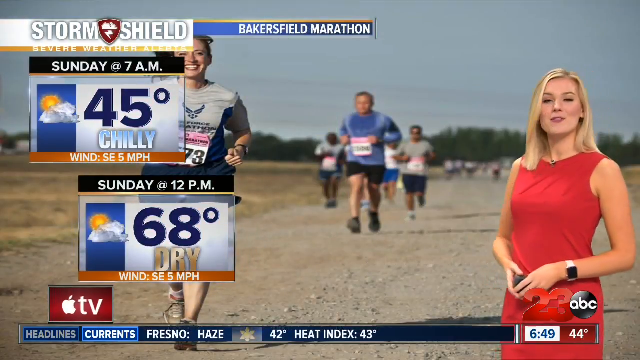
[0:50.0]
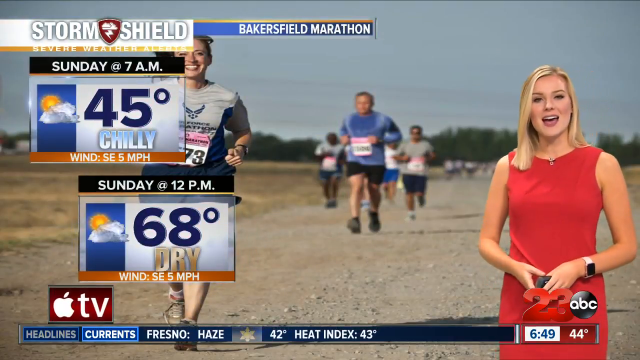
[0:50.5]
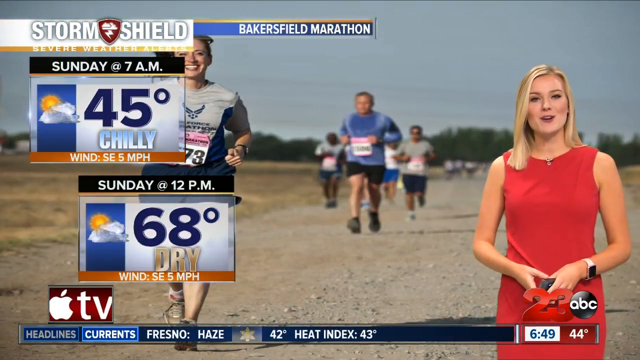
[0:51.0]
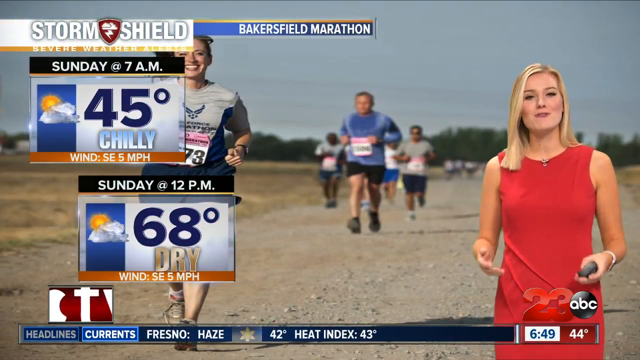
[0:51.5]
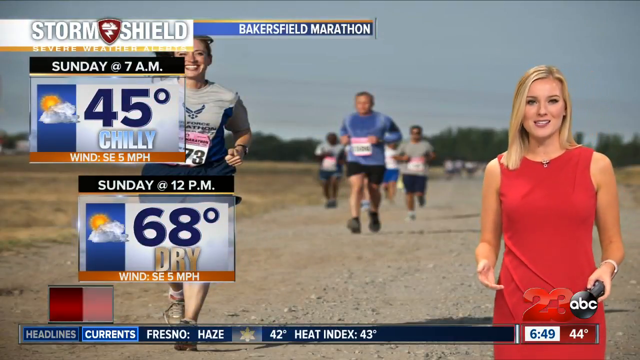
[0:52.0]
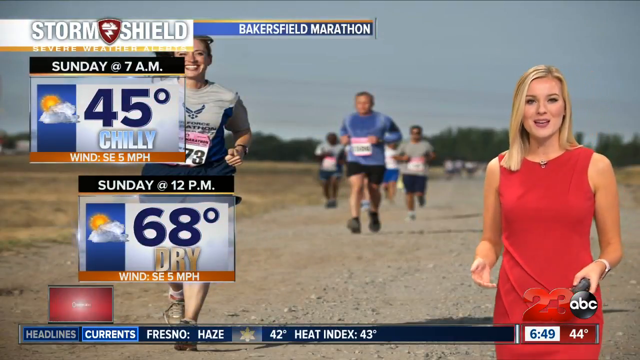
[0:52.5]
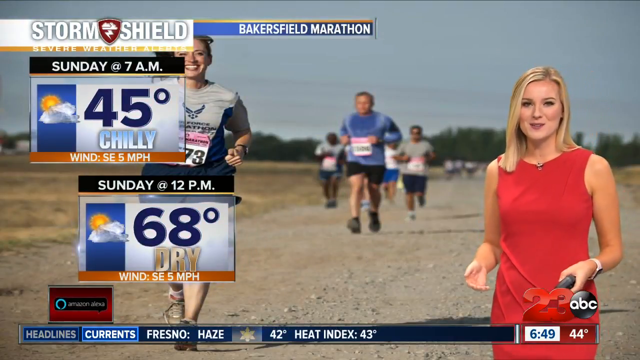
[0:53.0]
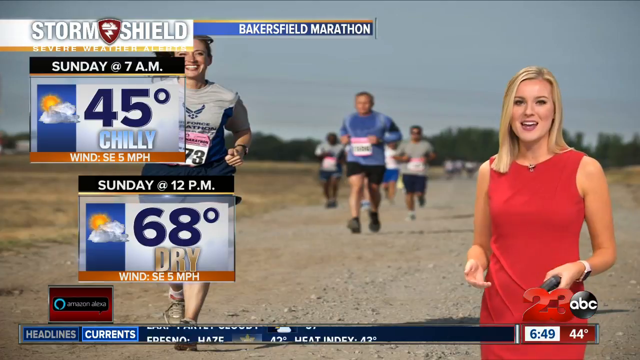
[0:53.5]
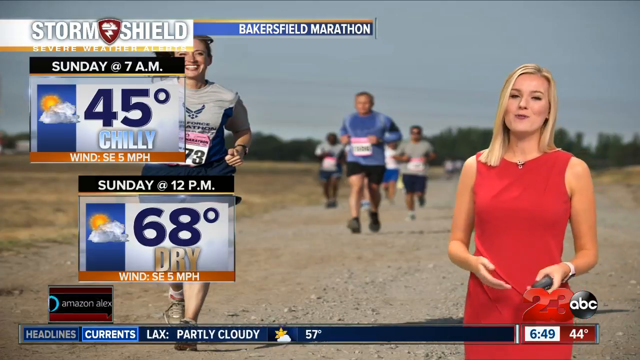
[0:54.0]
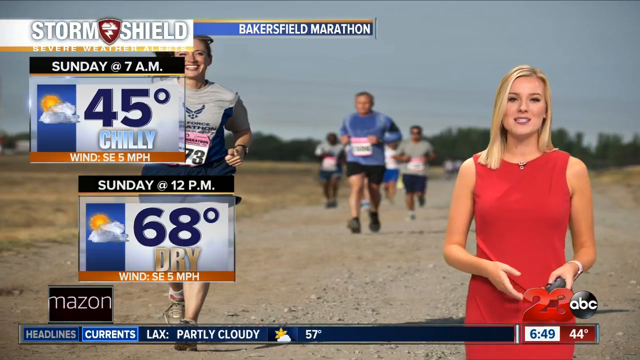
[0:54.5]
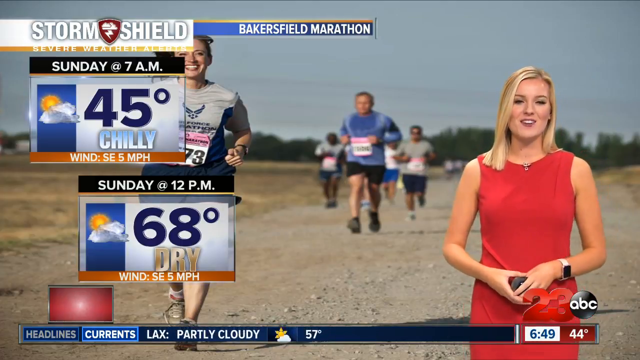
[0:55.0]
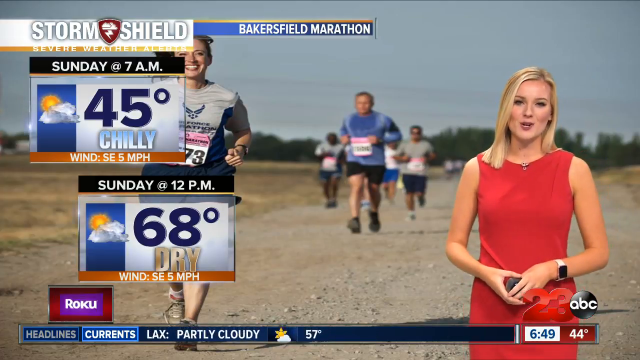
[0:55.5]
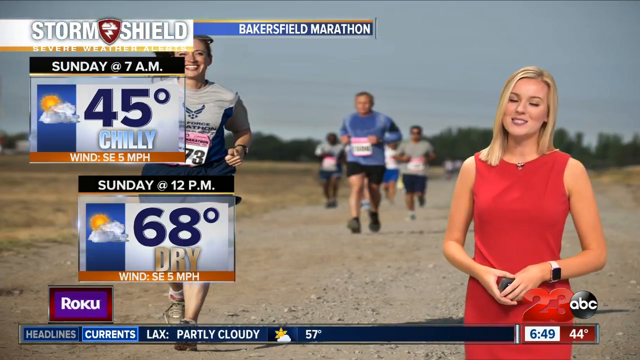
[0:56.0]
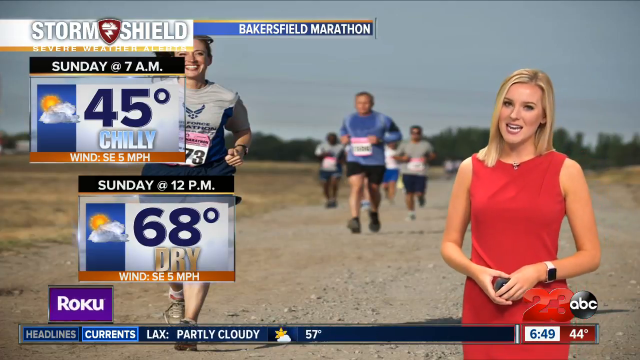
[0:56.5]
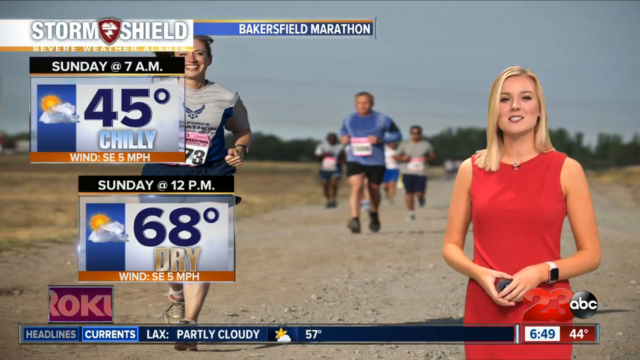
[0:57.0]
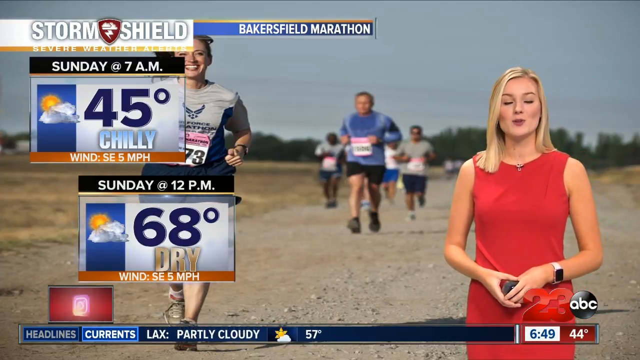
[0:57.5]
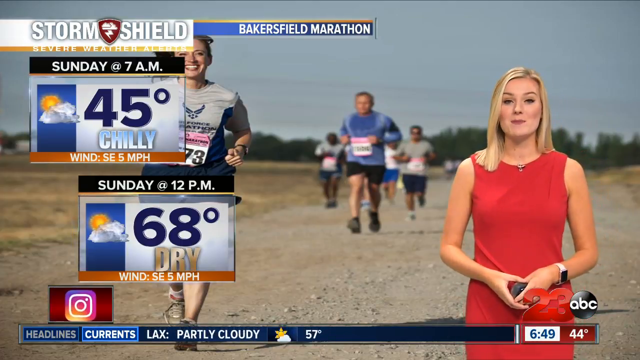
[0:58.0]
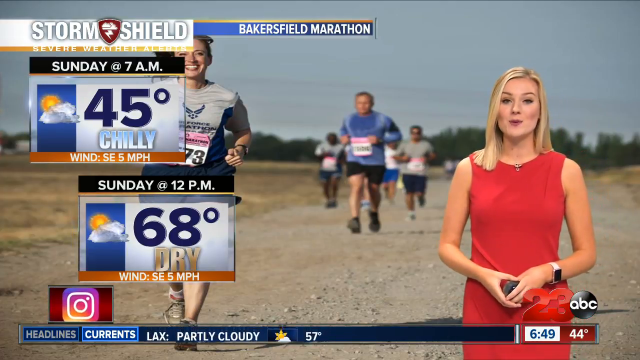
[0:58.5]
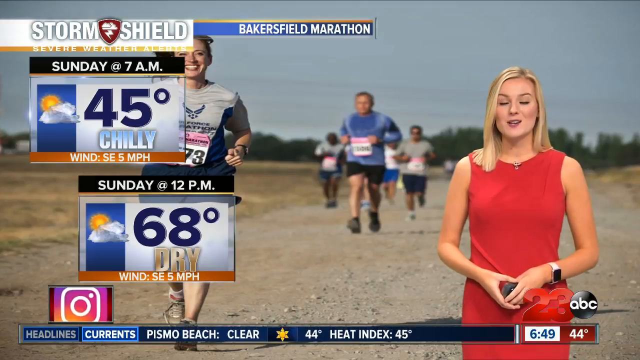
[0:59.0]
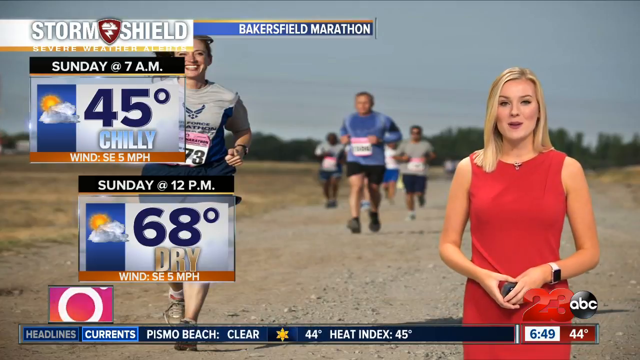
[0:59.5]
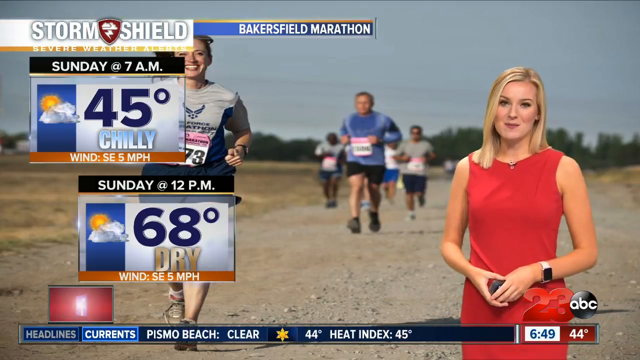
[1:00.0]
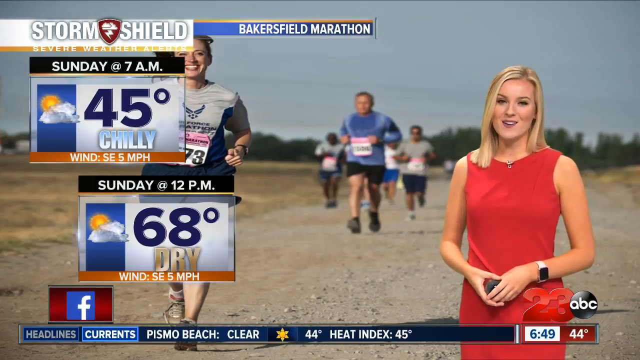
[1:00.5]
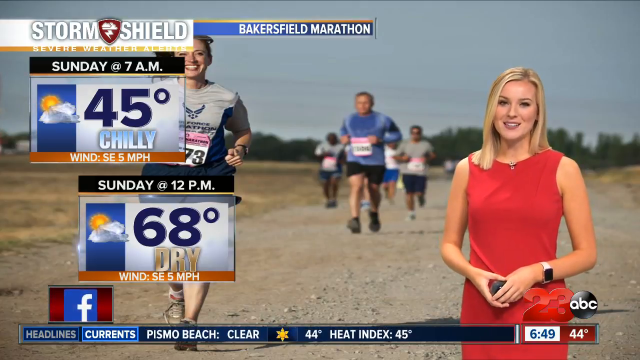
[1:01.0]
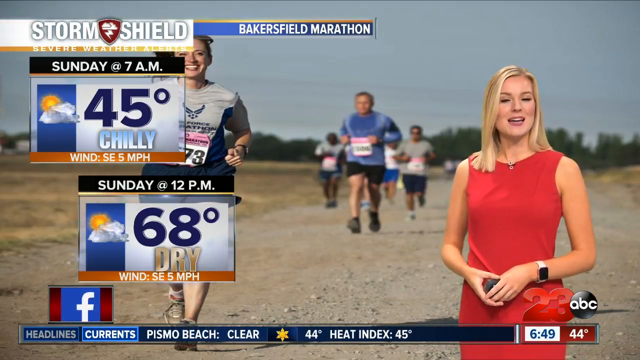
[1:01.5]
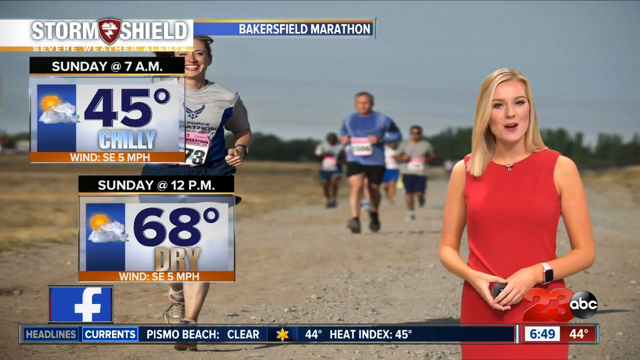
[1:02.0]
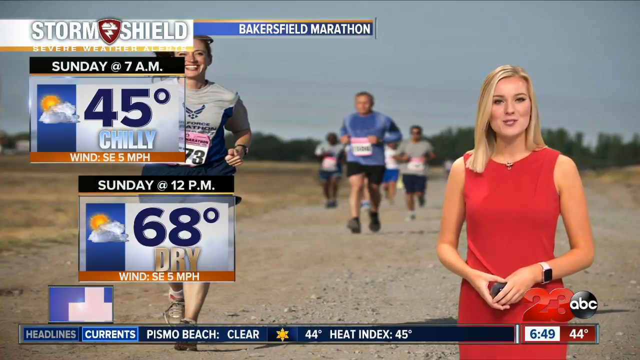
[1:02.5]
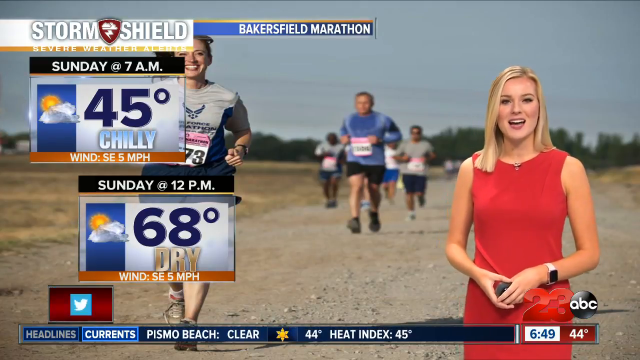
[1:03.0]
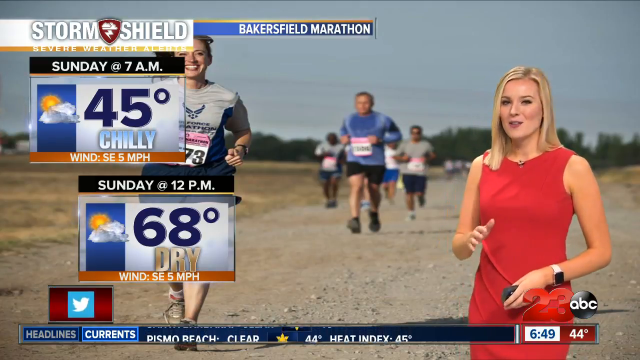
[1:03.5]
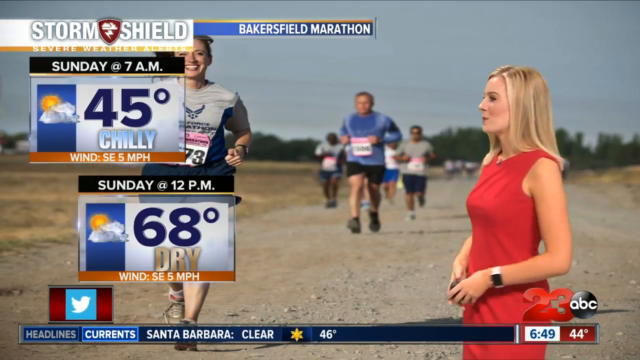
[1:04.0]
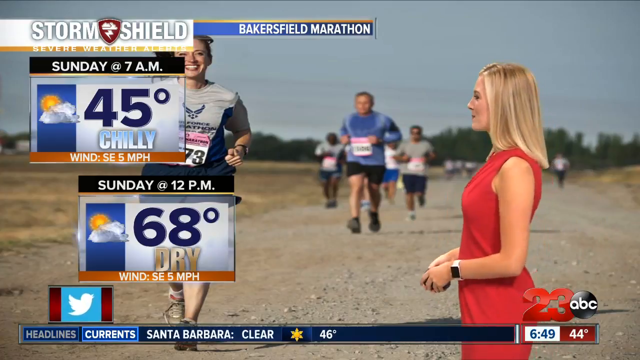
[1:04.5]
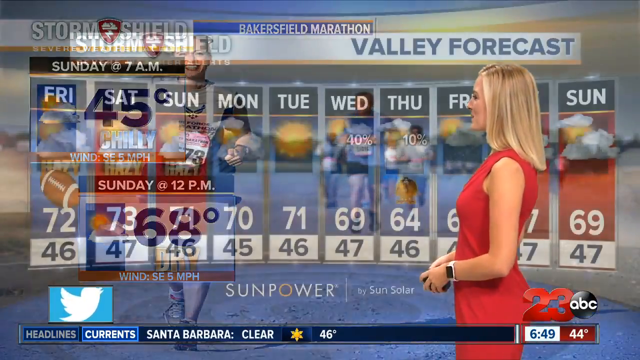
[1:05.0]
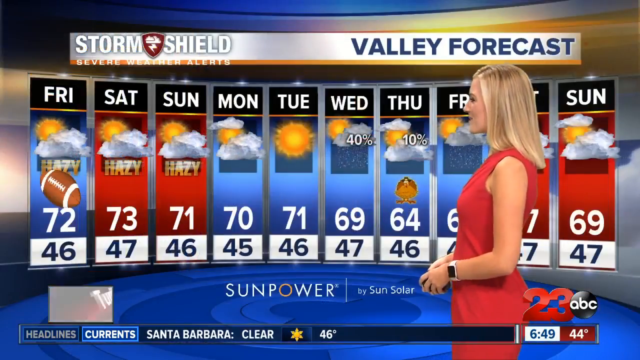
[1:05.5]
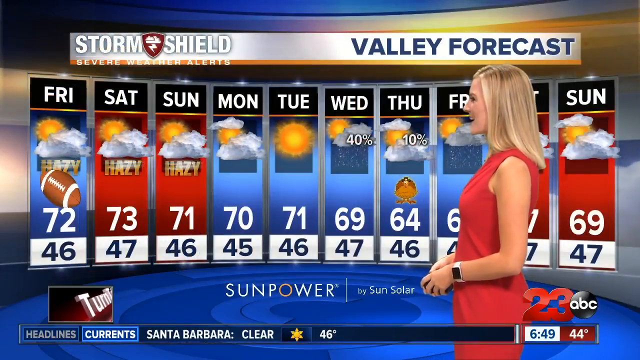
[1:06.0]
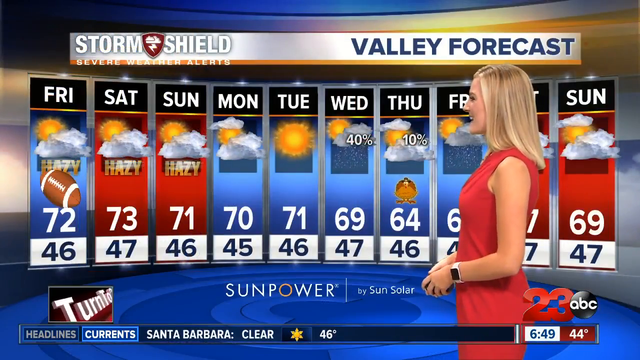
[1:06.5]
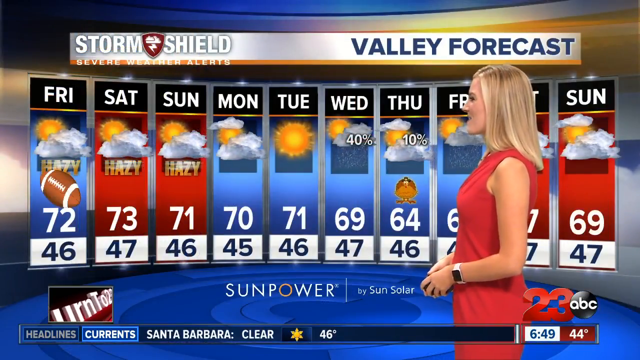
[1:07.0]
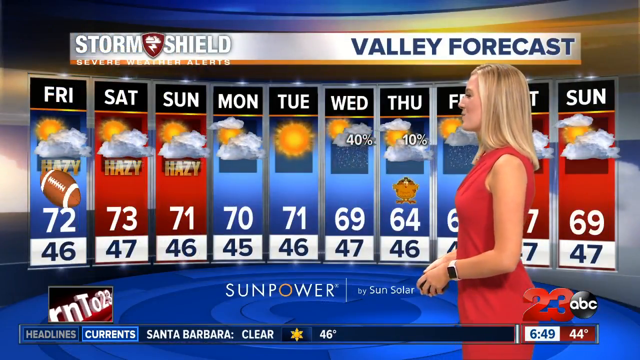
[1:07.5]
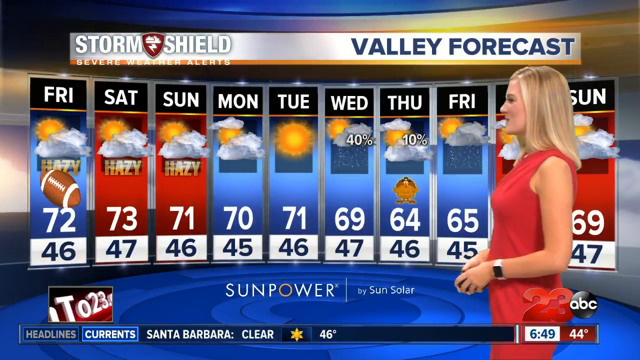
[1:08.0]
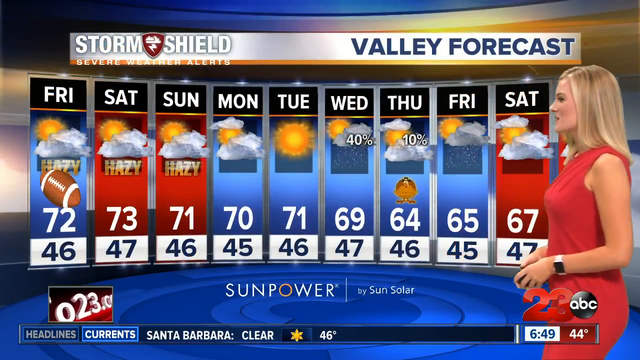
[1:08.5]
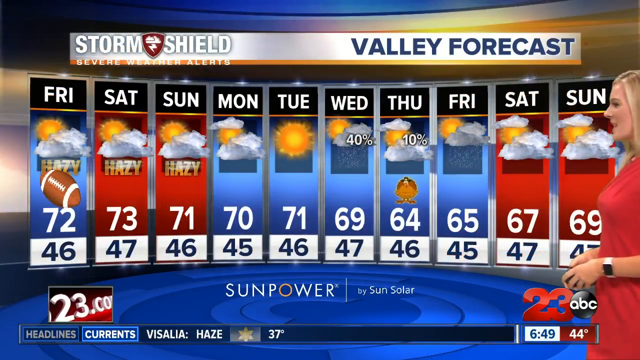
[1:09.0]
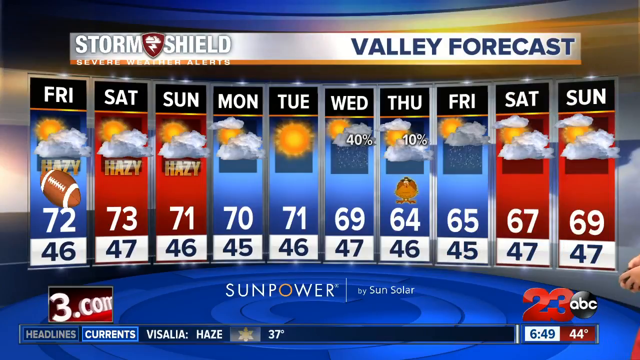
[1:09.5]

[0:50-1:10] The blonde news anchor in the red dress is now facing the camera. The same photo of the runners is in the background, with the cards showing the temperatures for Sunday on the far left of the screen. She smiles, moves her head from side to side and clasps her hands together, then gestures with her right hand before turning to the right. The background image fades to a full forecast titled "Valley Forecast," with vertical cards for each day from Friday through the following Sunday. The temperatures range from 72 on Friday to 69 on Sunday. The anchor keeps facing to the right and then steps back out of the frame, so every weather card is visible.